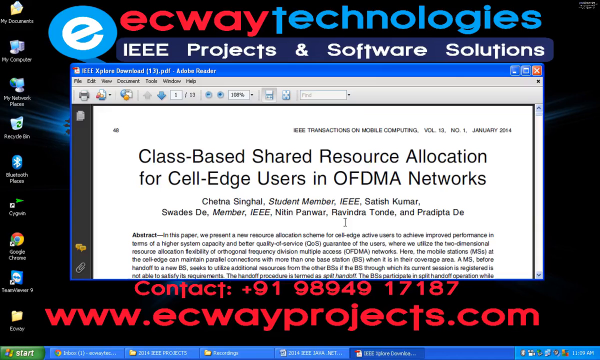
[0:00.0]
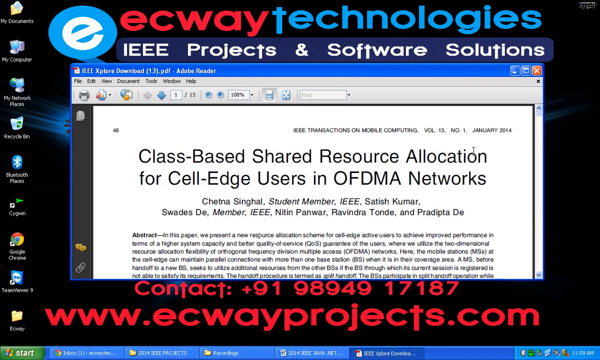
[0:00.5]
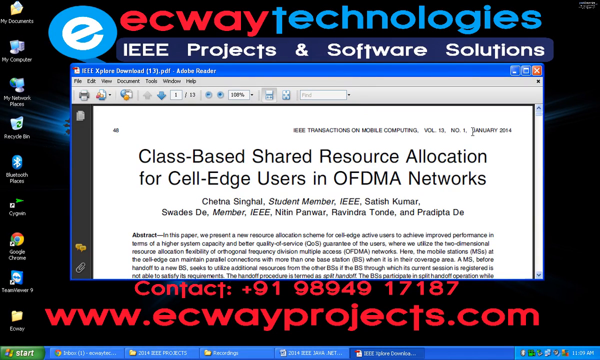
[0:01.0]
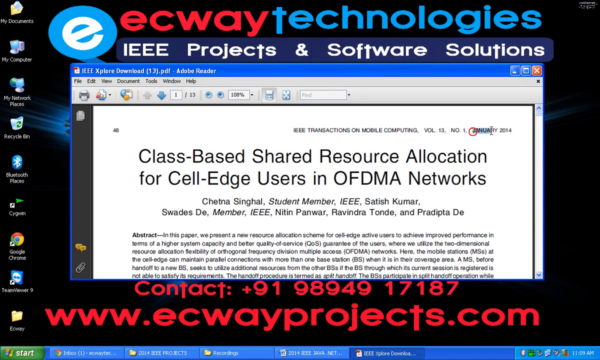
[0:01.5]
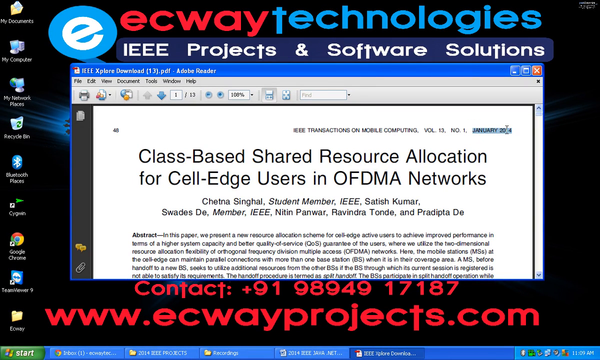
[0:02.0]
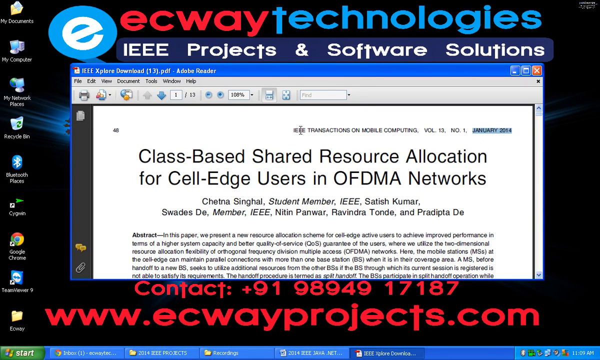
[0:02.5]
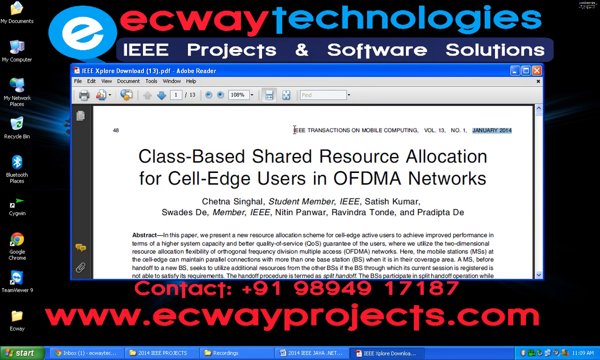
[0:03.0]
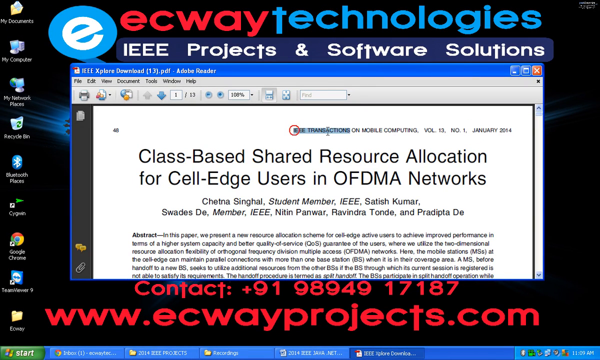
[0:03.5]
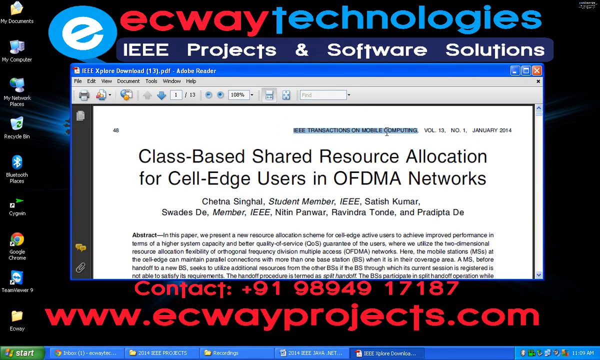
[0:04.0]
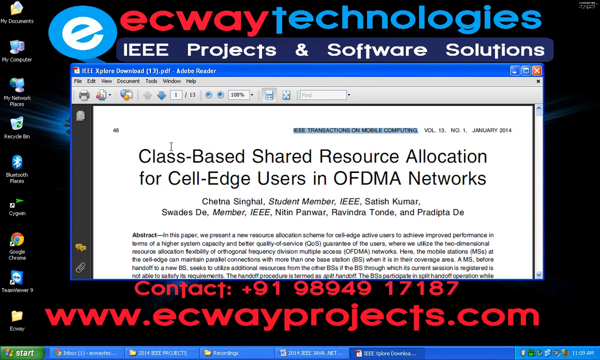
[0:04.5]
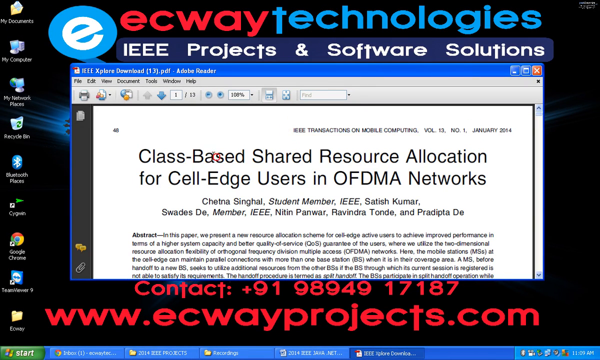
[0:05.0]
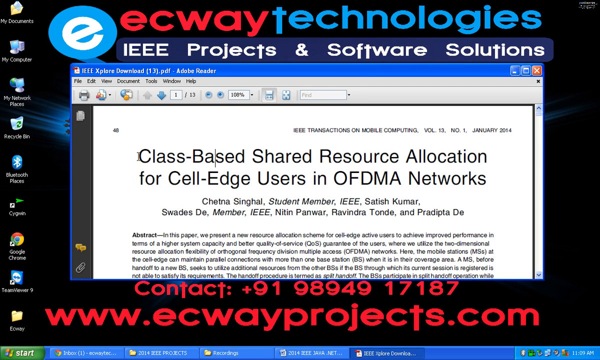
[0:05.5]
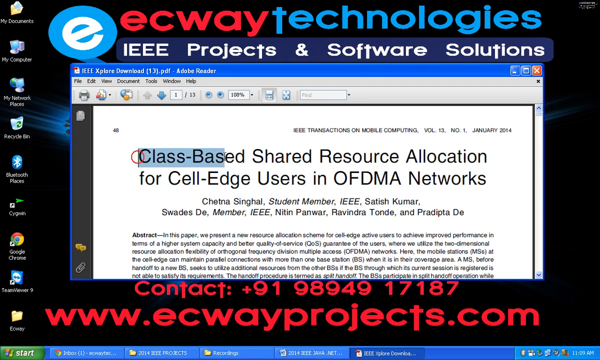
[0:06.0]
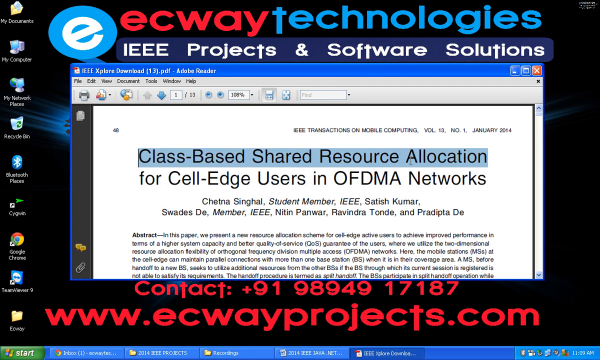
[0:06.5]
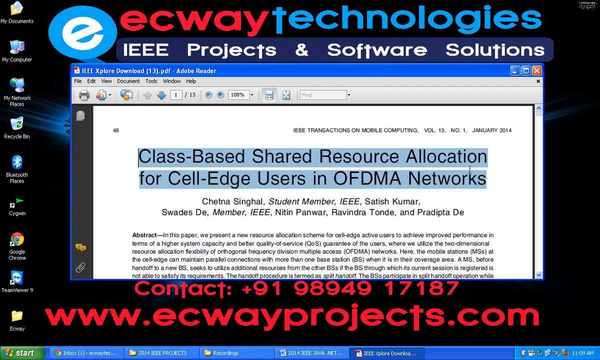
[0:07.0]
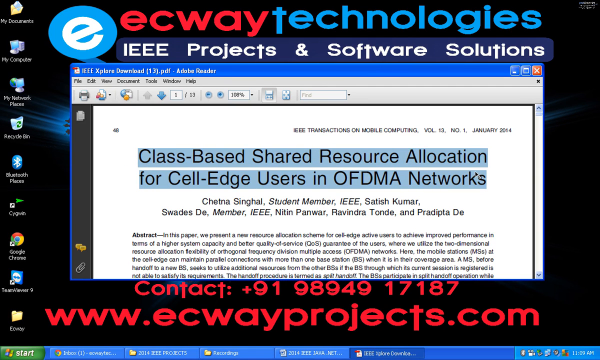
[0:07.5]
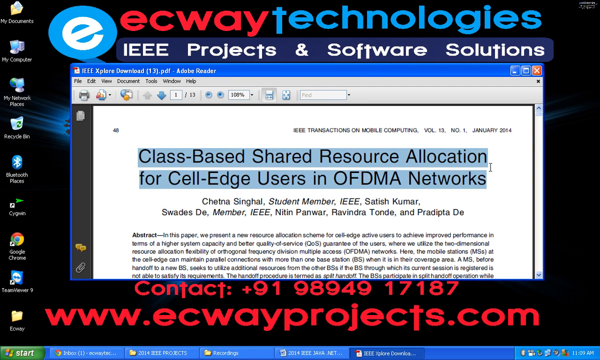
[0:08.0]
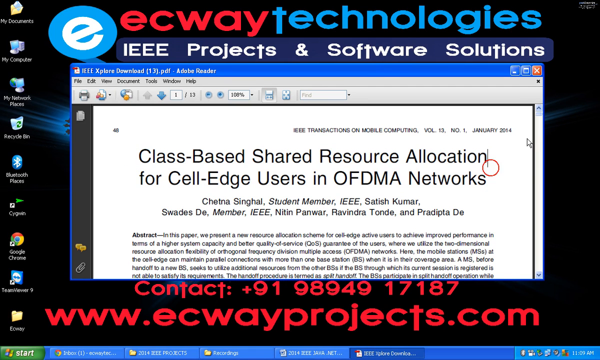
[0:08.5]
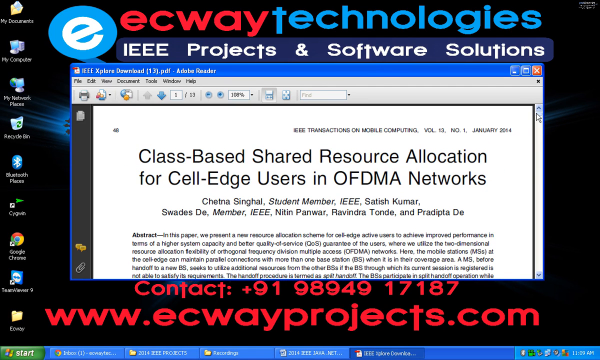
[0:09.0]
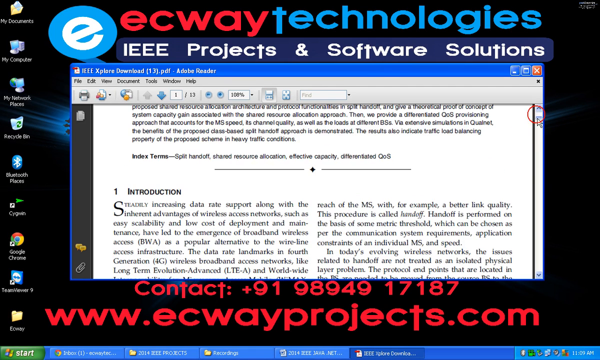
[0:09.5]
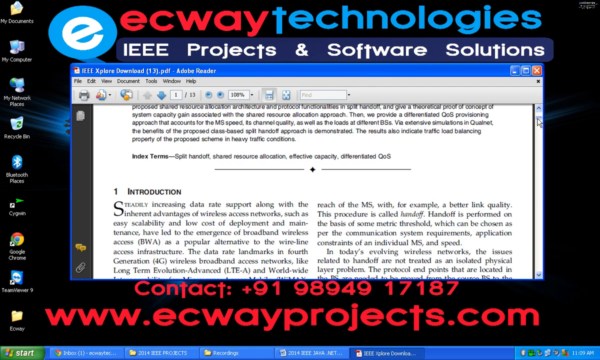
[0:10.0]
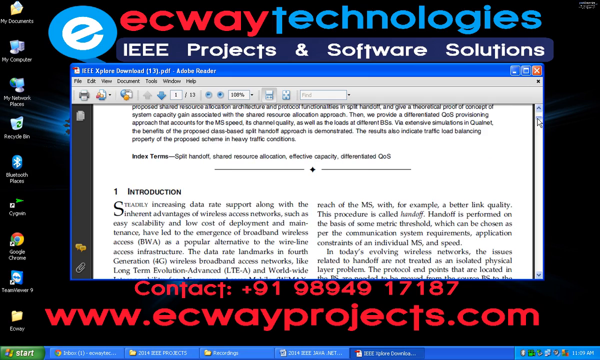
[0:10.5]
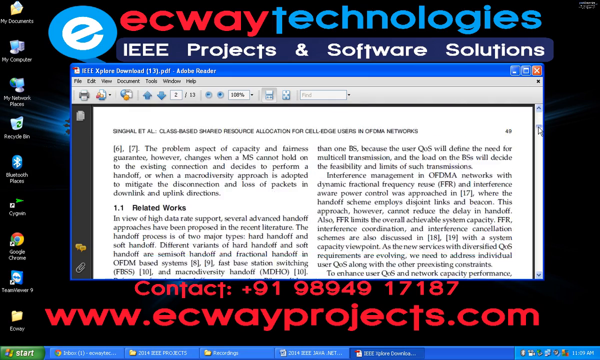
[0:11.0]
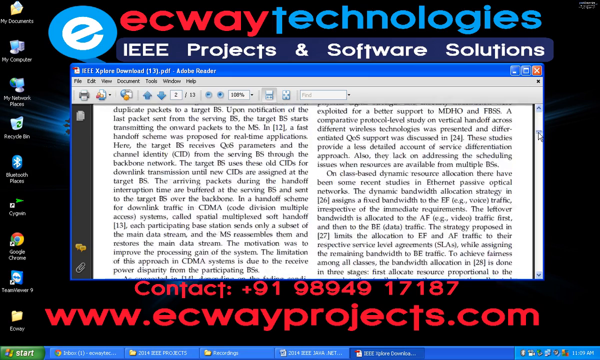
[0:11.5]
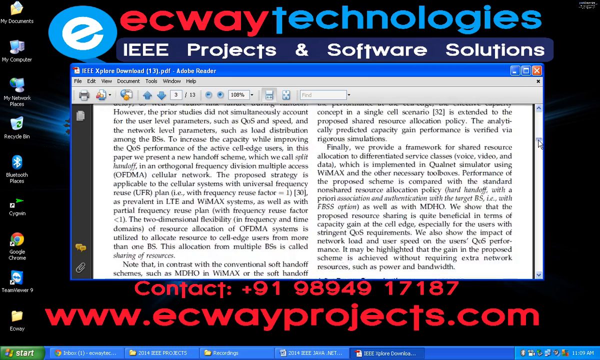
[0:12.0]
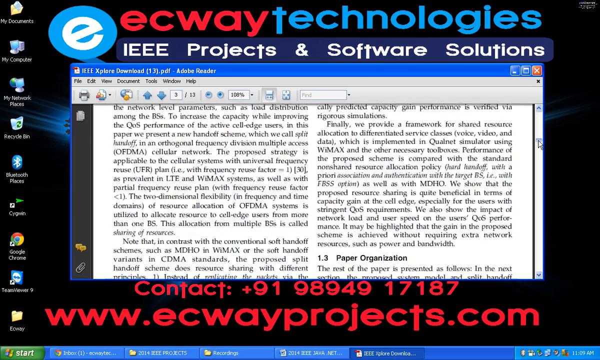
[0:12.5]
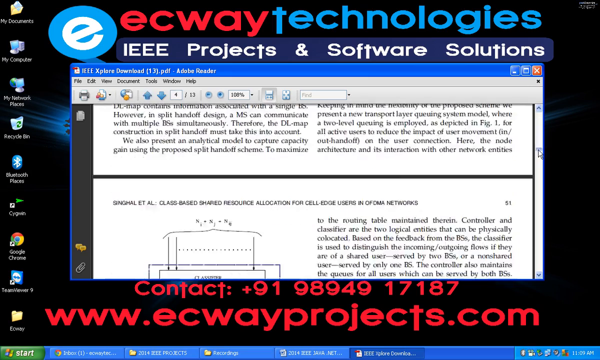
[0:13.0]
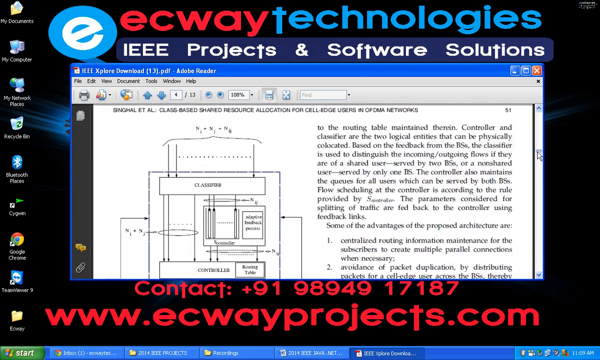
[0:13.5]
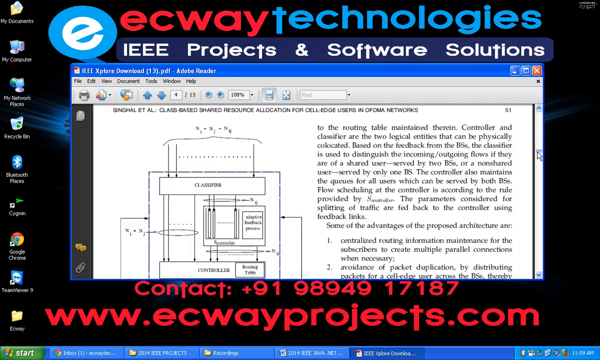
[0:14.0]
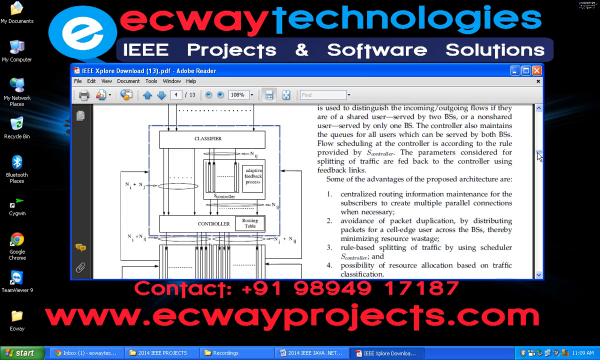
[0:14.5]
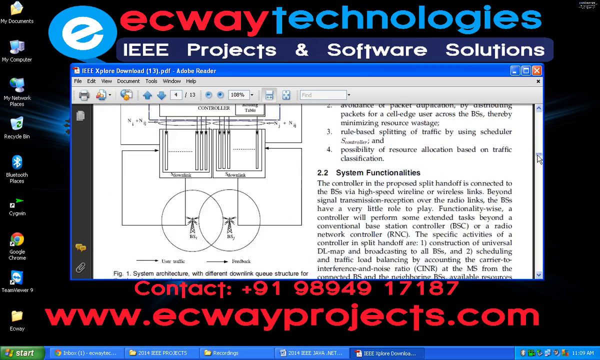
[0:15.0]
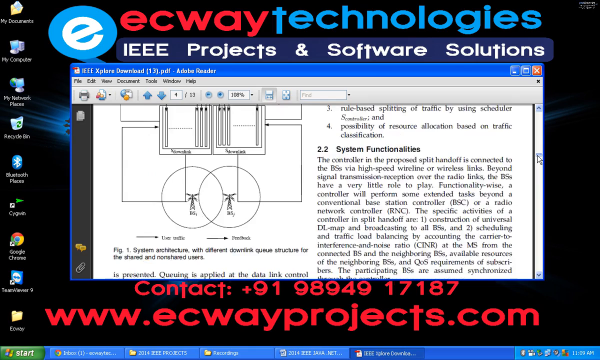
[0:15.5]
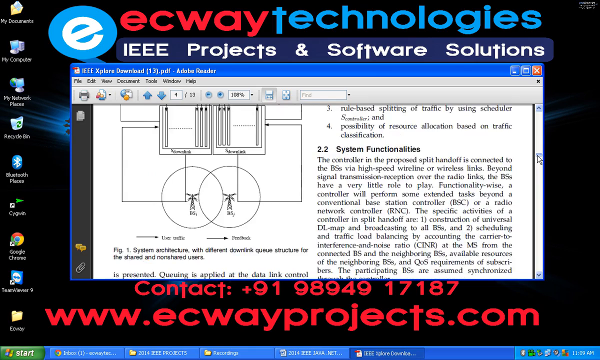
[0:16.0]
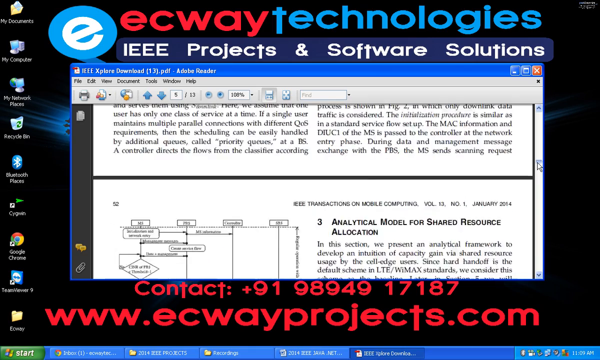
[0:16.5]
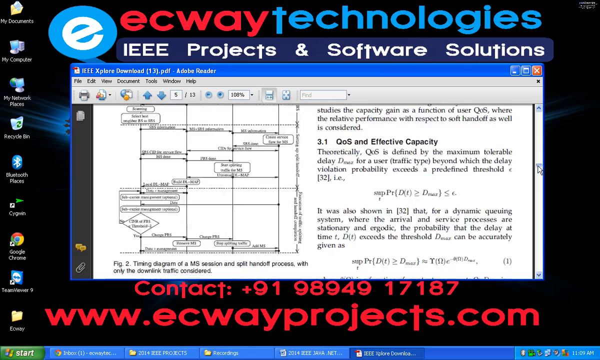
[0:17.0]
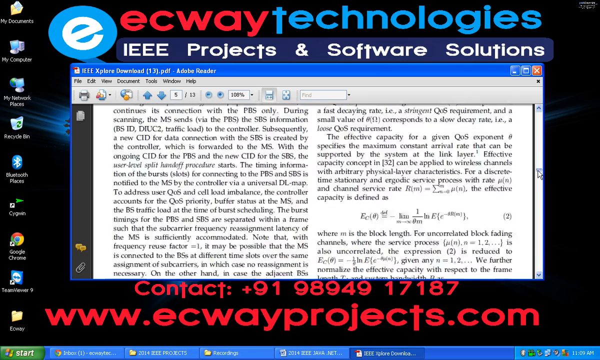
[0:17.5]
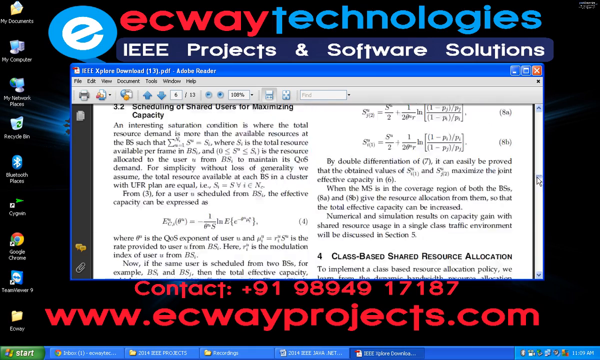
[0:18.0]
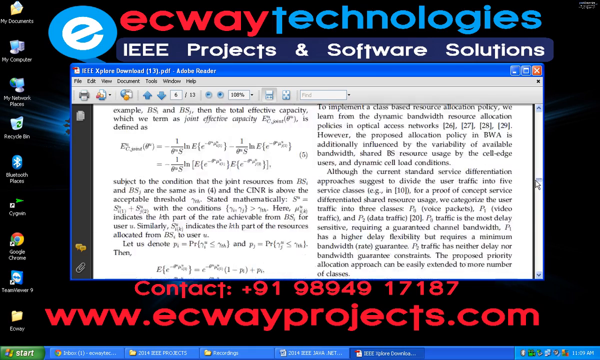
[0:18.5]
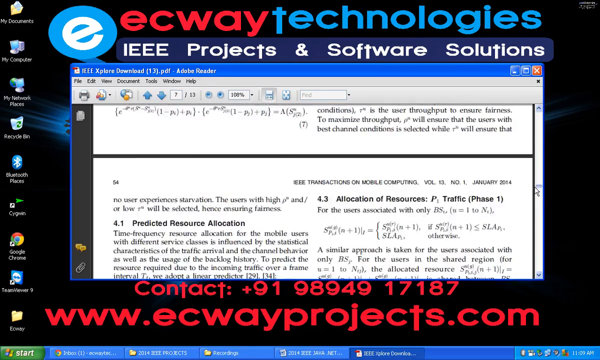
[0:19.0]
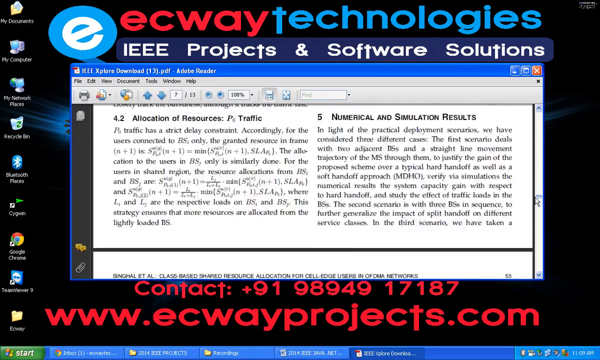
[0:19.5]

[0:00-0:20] A computer screen shows what looks like a desktop, with a window open in the middle. At the top of the window is a heading with an e-logo and the text "ECWay Technologies, IEEE Projects and Software Solutions". Along the bottom of the window are a contact number and the website URL, "ecwayprojects.com". The window displays what appears to be a bunch of technological data in black and white. The title reads "Class-Based Shared Resource Allocation for Cell Edge Users in OFDMA Networks", and the document looks almost like a white paper or report, with a lot of words and some formulas, apparently an advanced technological document being highlighted. It is scrolled down further and further, too fast to read. It is possibly a tutorial or informational video ECWay Technologies is showing for its services.